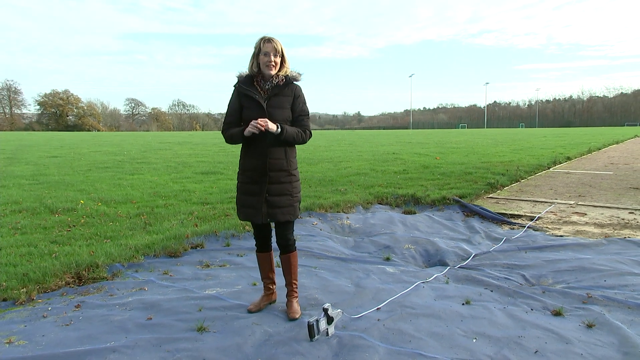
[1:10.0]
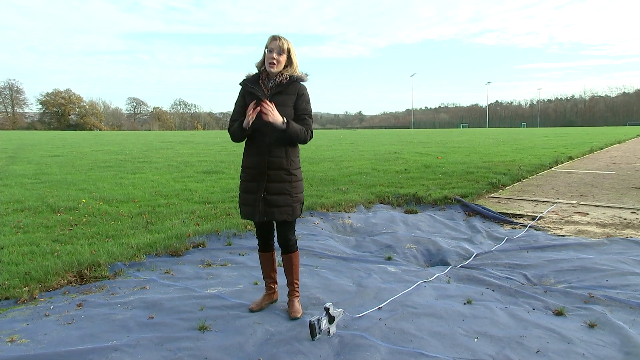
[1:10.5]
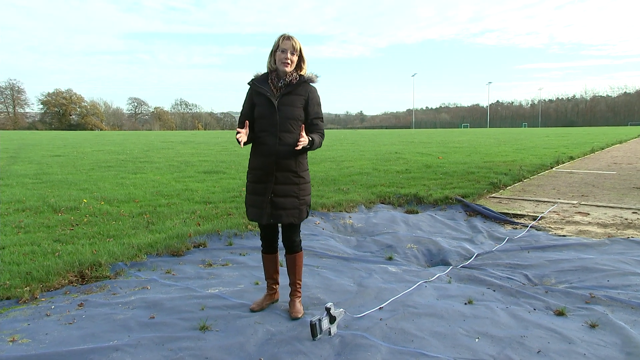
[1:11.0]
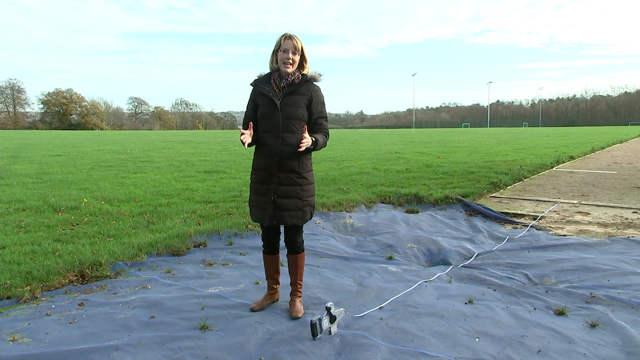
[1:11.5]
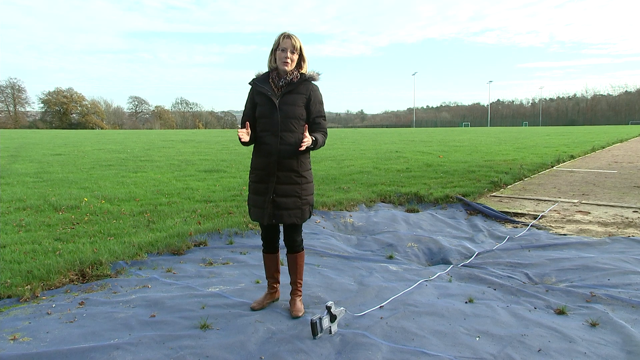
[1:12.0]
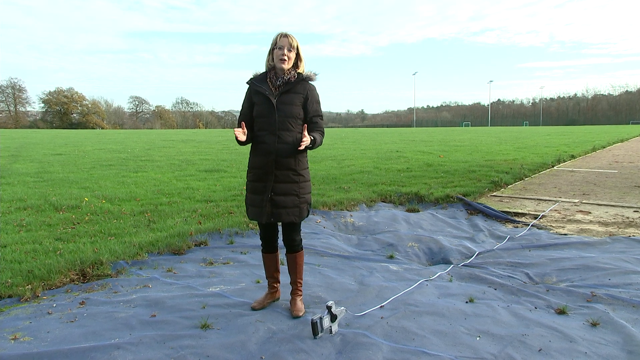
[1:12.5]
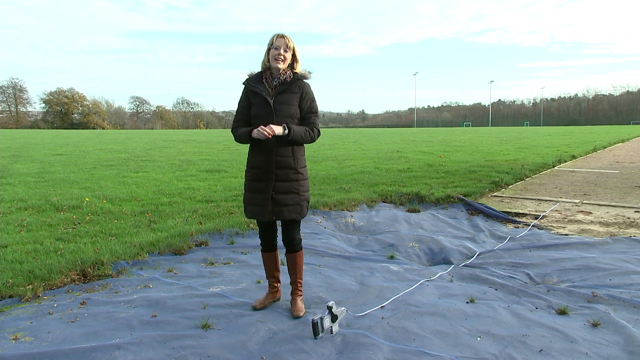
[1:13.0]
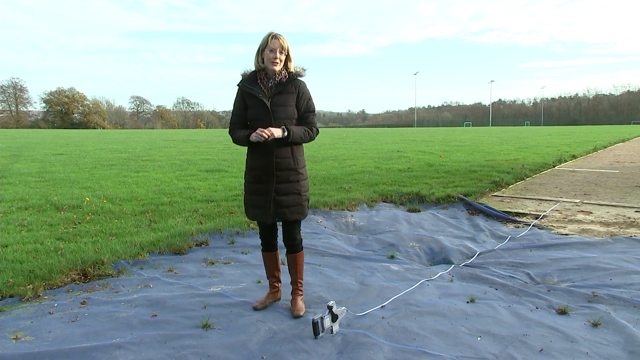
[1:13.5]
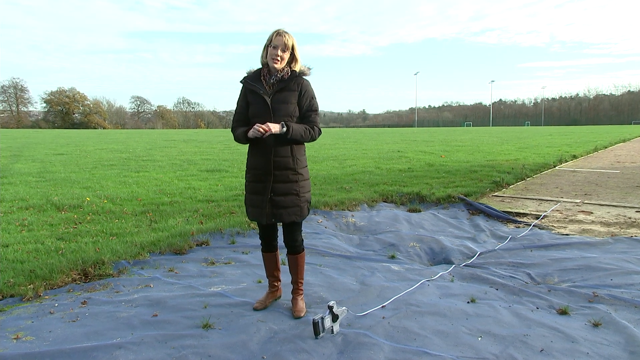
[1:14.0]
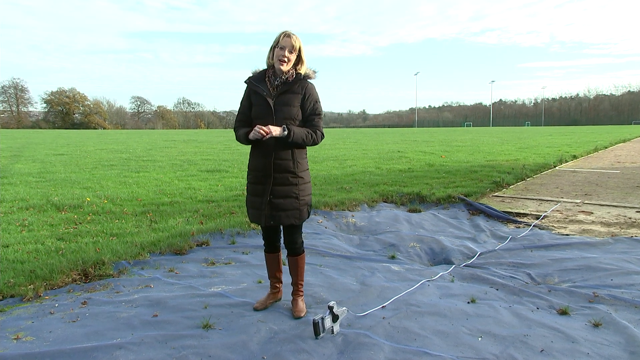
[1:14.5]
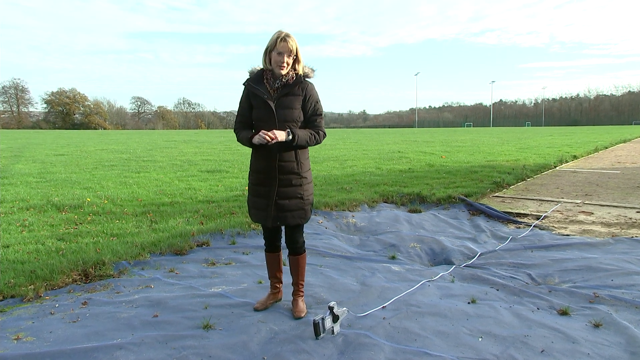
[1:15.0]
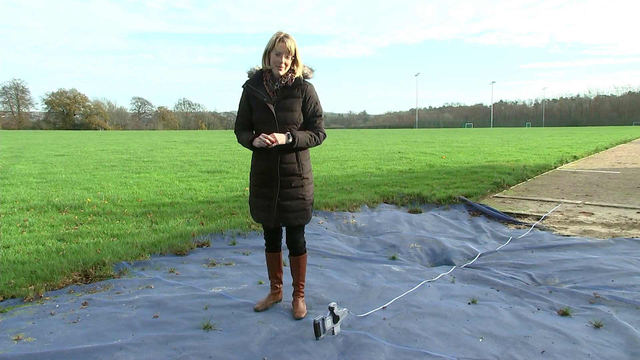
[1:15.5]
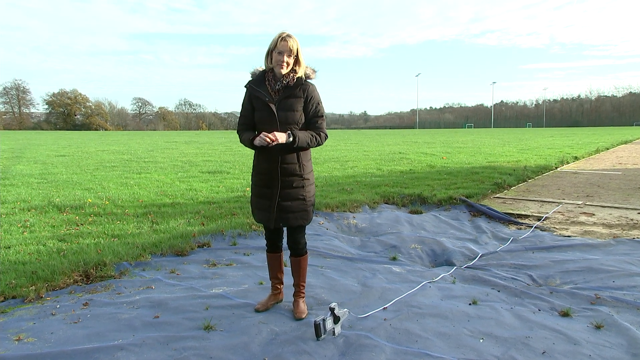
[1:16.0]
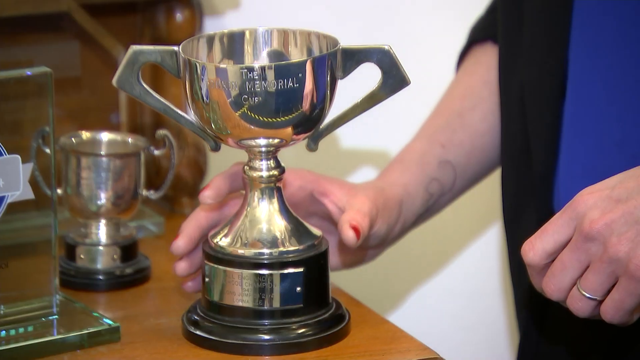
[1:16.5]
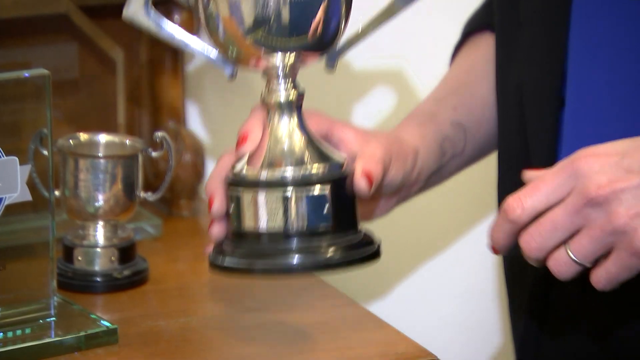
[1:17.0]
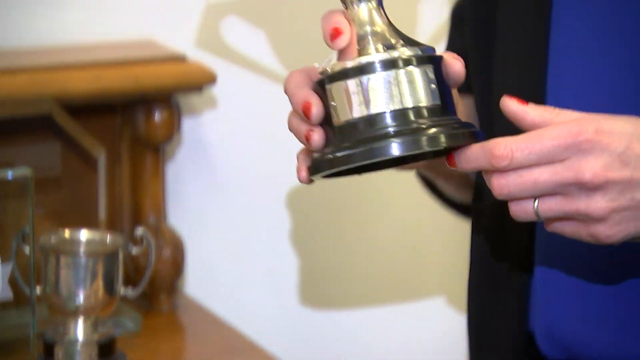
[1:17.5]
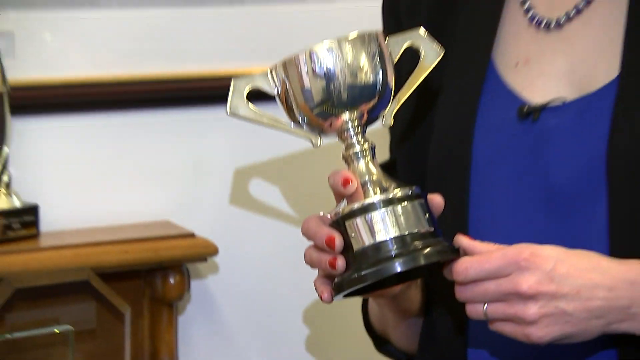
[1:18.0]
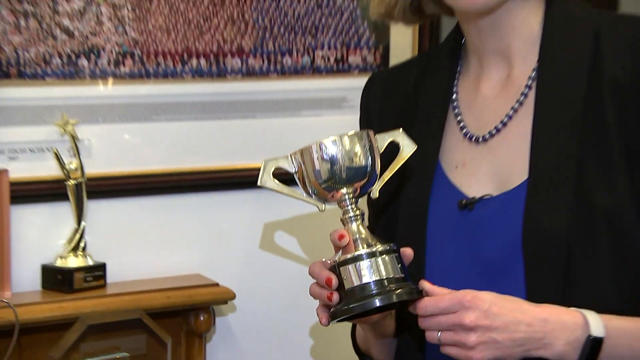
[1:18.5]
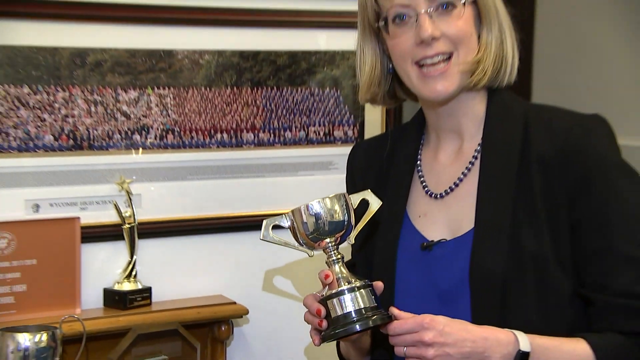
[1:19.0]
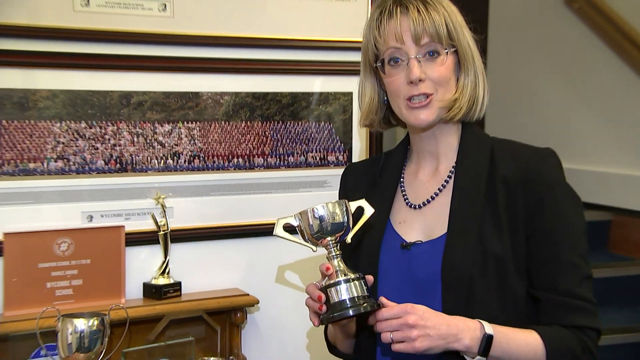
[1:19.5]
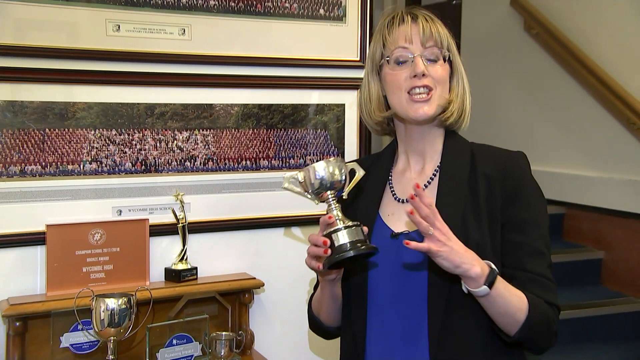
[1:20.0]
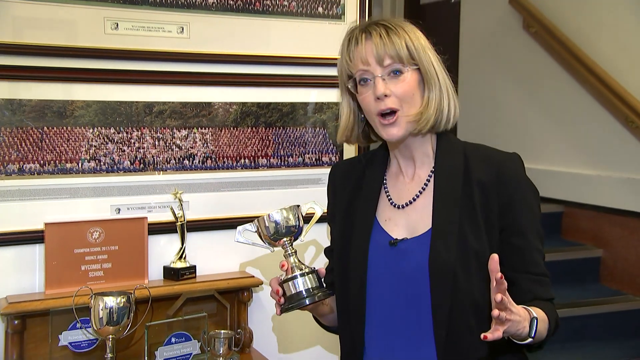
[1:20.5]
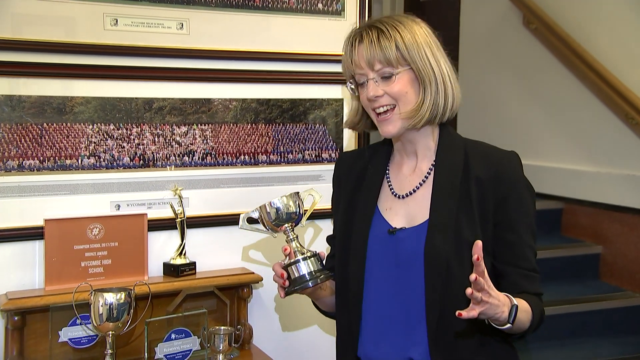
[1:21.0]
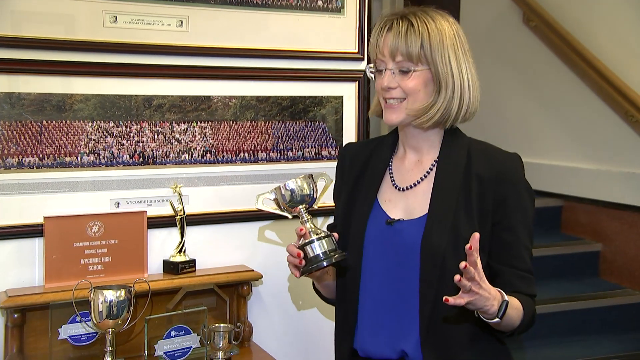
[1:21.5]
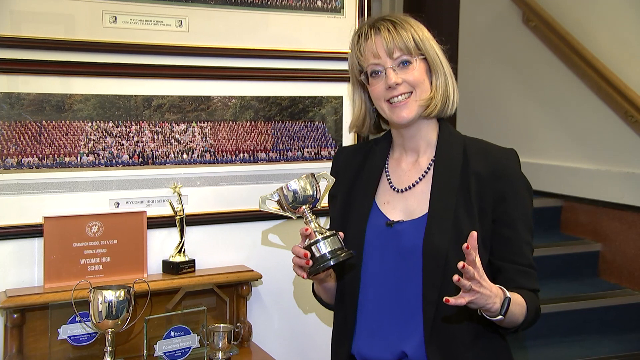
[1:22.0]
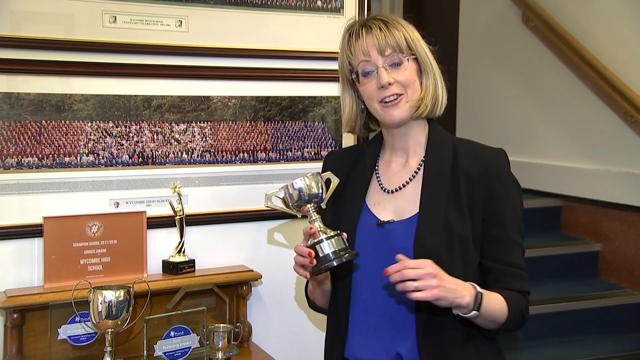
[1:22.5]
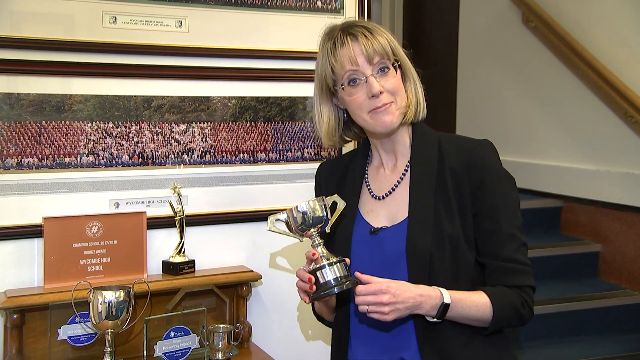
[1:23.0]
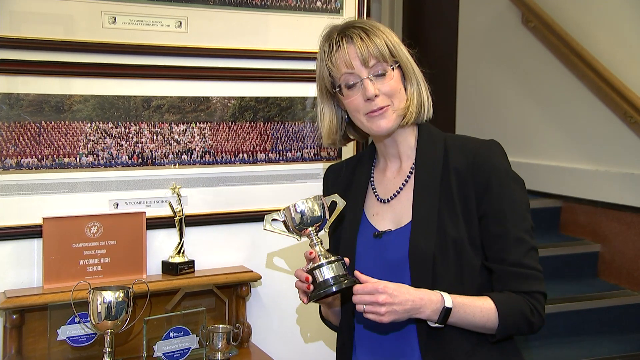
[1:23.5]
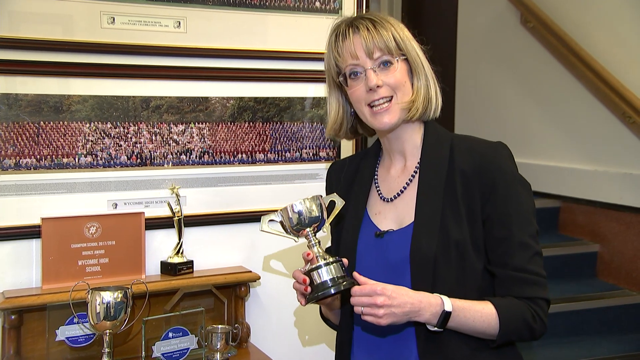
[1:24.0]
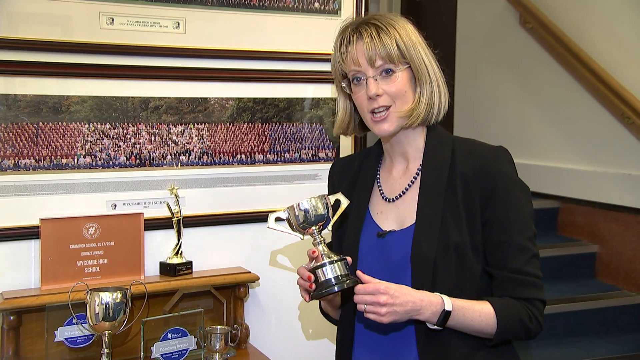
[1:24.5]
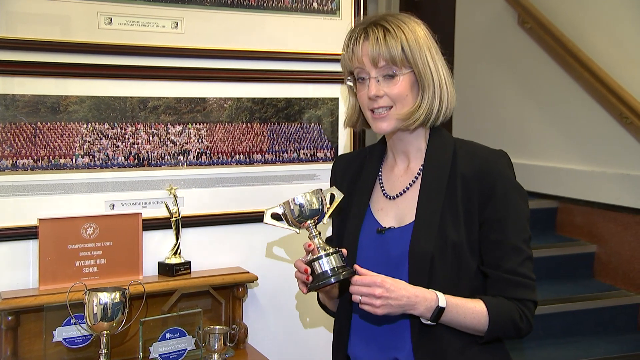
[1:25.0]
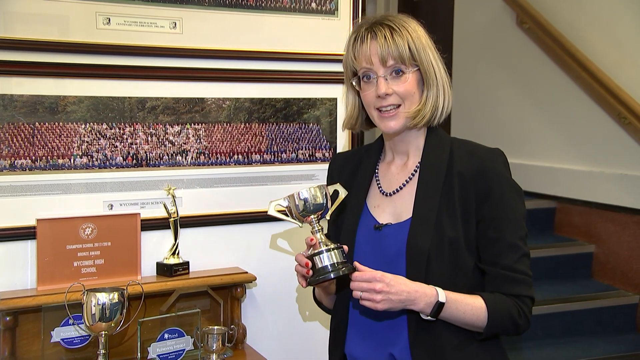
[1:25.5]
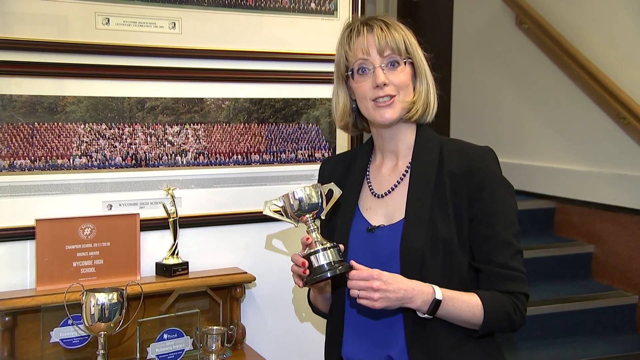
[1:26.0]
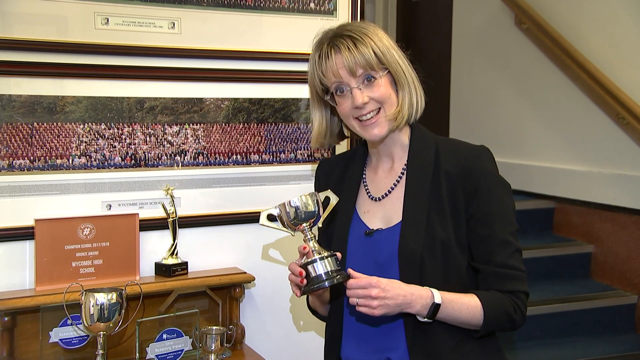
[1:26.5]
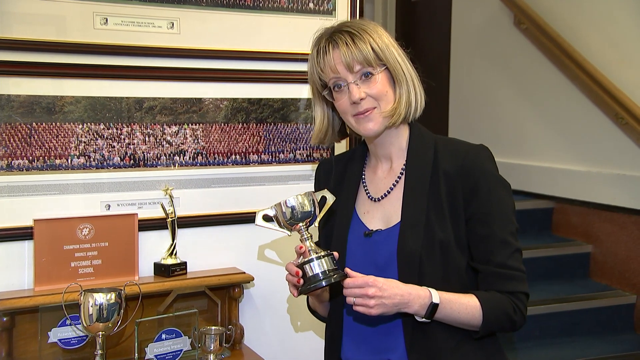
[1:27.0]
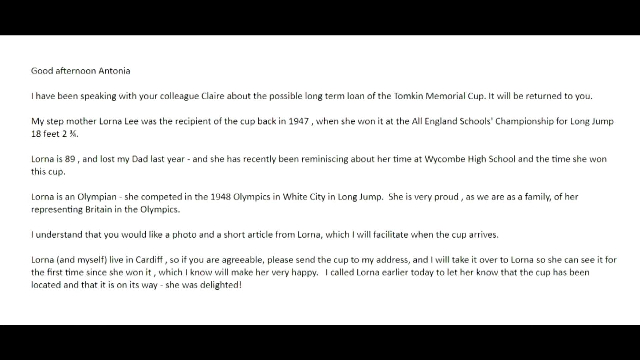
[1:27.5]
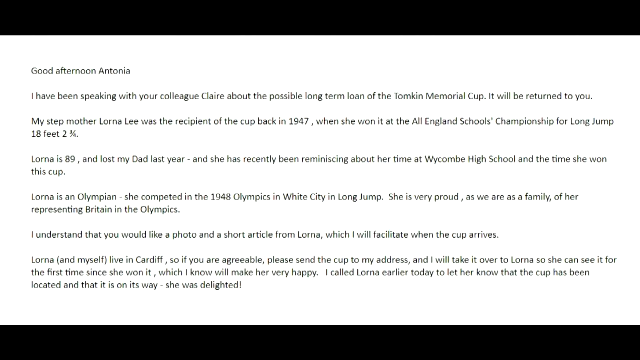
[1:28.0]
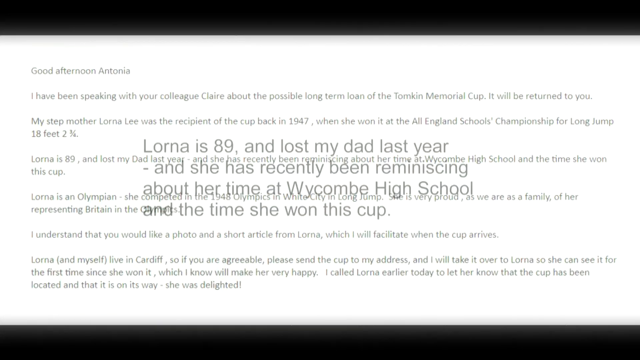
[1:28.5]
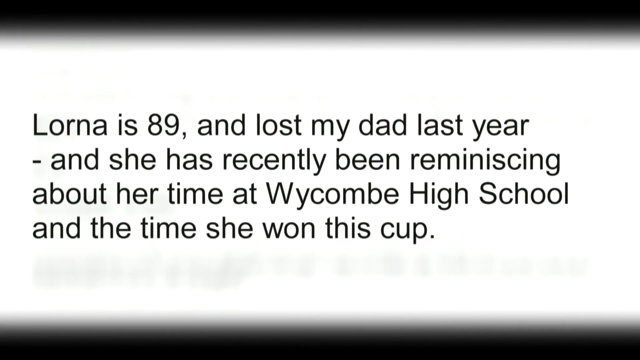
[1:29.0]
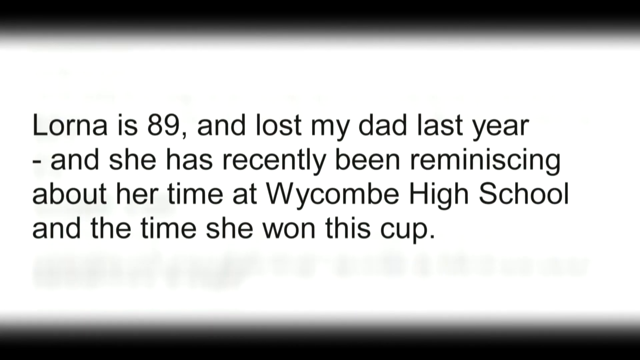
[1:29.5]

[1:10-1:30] The reporter stands on a blue tarp, wearing black pants, a jacket, earrings, glasses and a watch on her left wrist; she has blonde hair. Behind her is a big field with a lot of trees and grass. She is then seen inside a home holding a trophy that apparently is not hers. Text appears on the screen, including: "Good afternoon, Antonia. I've been speaking with your colleague, Claire, about the possible long-term loan of the Tompkins Memorial cup. It will be returned to you. My step mother, Lorna Lee was a recipient of the cup back in 1947", "Lorna is 89. I lost my dad last year", "Lorna is an Olympian", "Lorna and myself live in Cardiff. So if you are agreeable, please send the cup to my address and I will take it over to Lorna so she can see it for the first time since she won it, which I know will make her very happy" and "I called Lorna earlier today to let her know that the cup has been located and that is on its way."